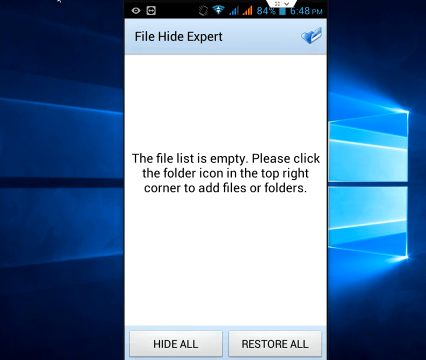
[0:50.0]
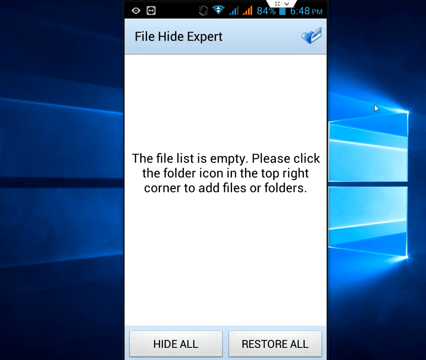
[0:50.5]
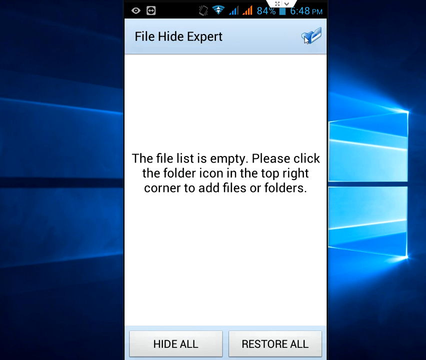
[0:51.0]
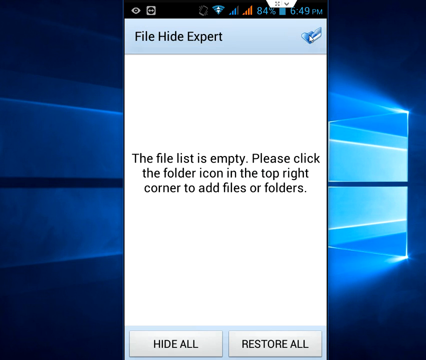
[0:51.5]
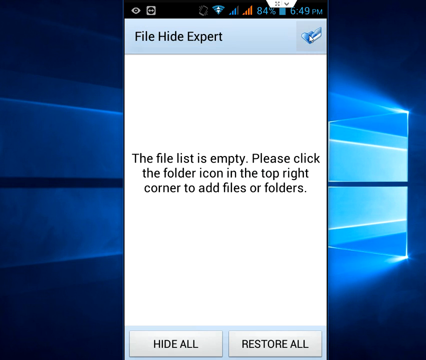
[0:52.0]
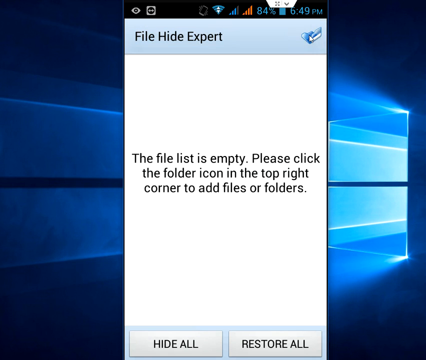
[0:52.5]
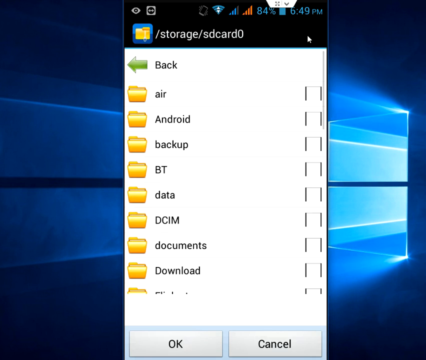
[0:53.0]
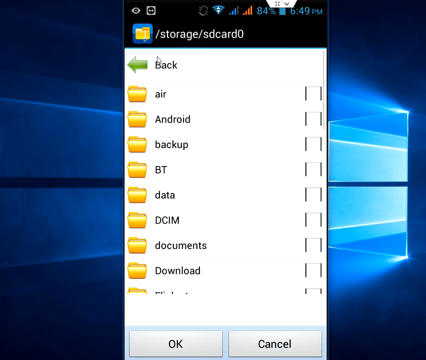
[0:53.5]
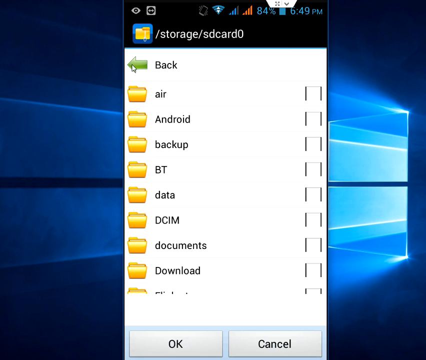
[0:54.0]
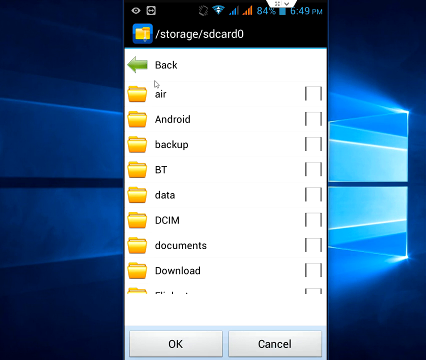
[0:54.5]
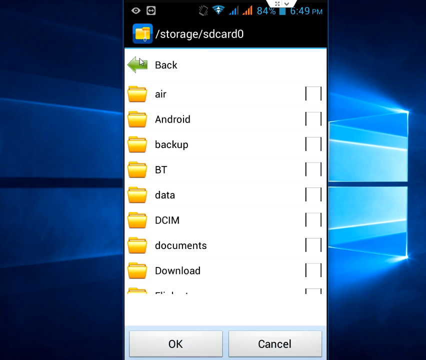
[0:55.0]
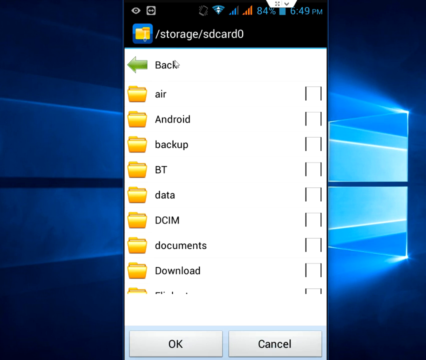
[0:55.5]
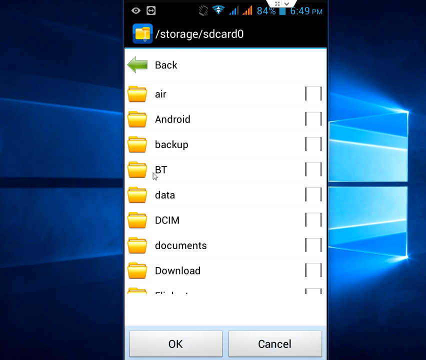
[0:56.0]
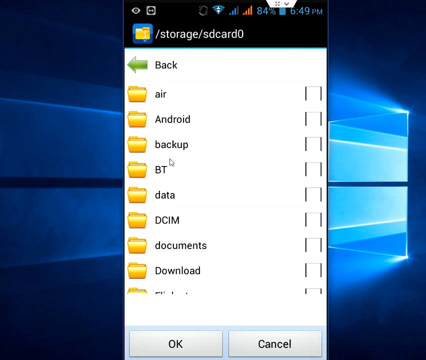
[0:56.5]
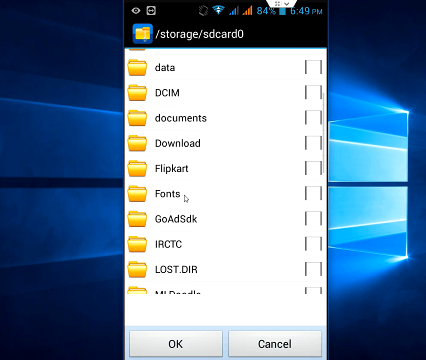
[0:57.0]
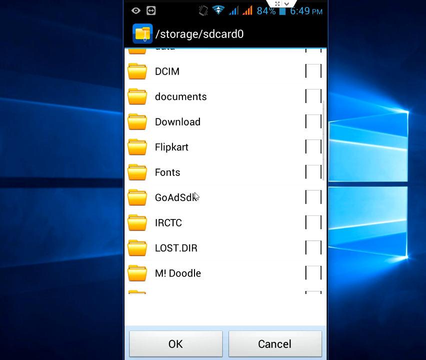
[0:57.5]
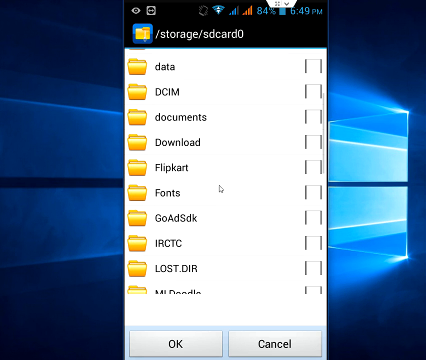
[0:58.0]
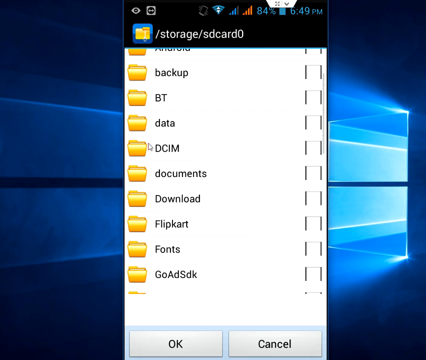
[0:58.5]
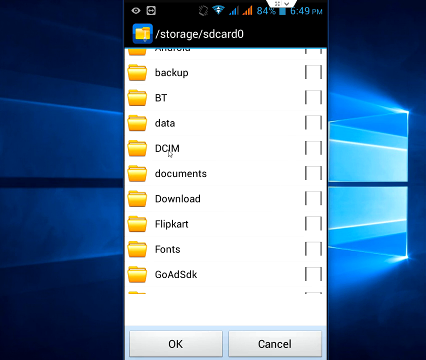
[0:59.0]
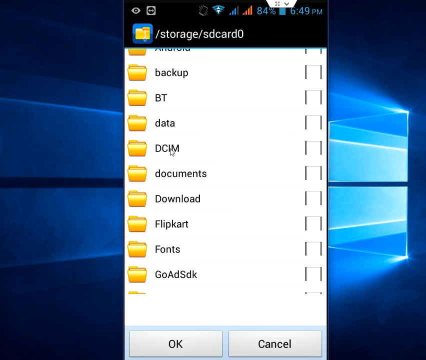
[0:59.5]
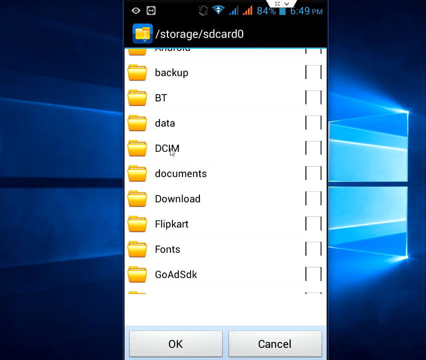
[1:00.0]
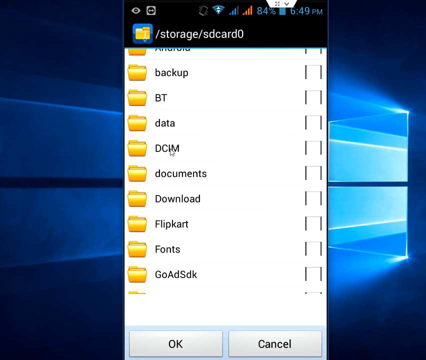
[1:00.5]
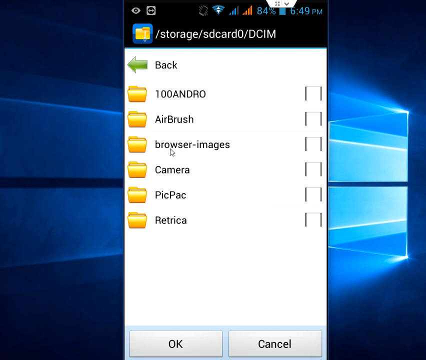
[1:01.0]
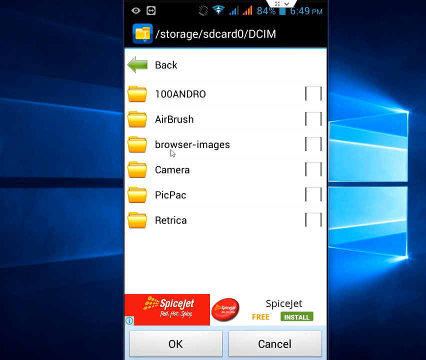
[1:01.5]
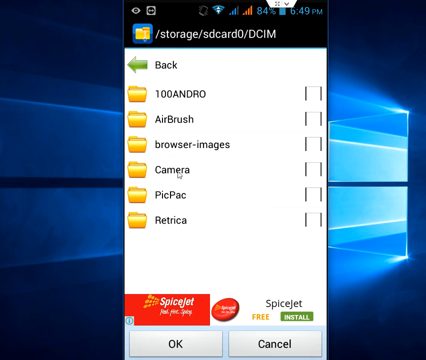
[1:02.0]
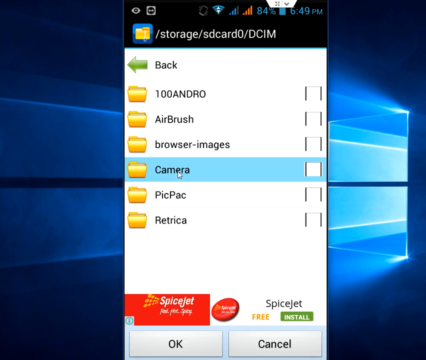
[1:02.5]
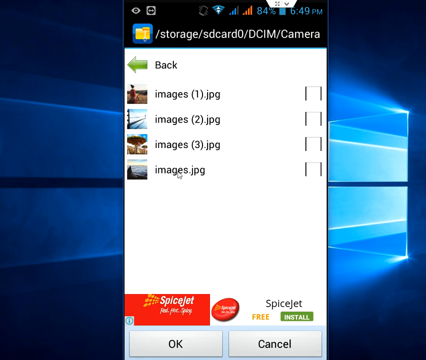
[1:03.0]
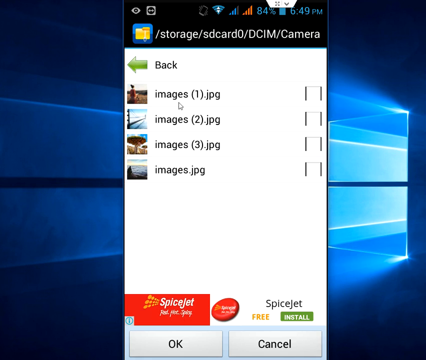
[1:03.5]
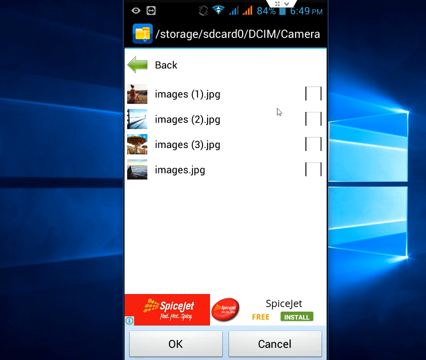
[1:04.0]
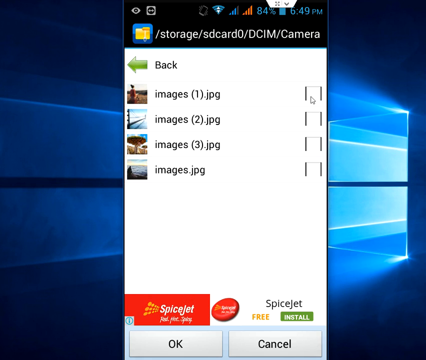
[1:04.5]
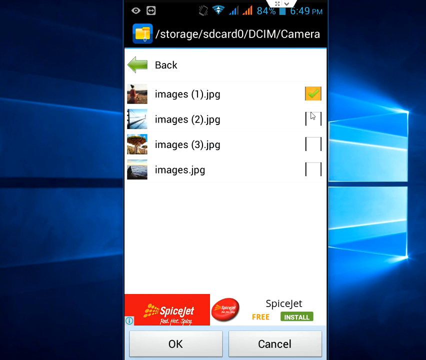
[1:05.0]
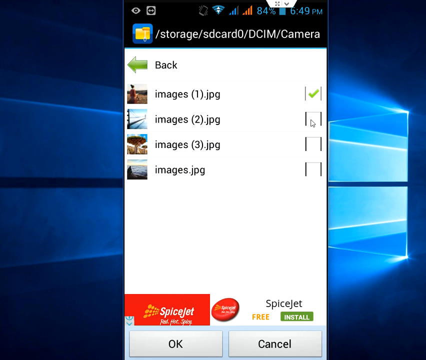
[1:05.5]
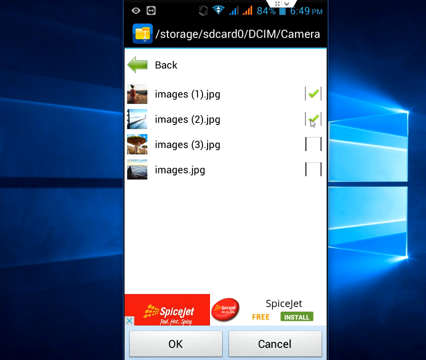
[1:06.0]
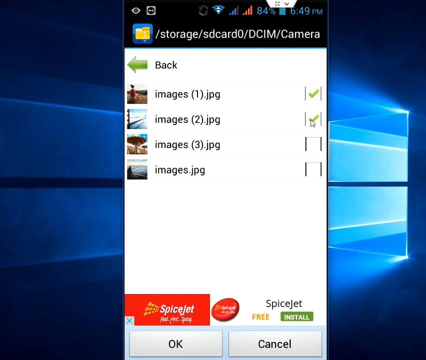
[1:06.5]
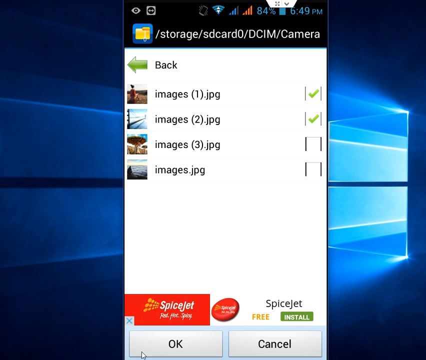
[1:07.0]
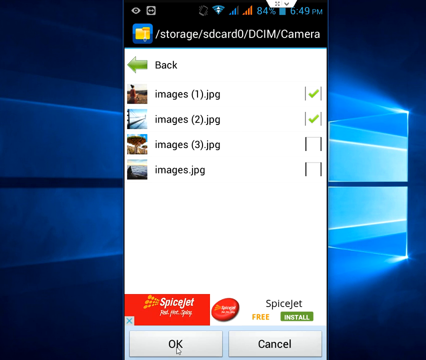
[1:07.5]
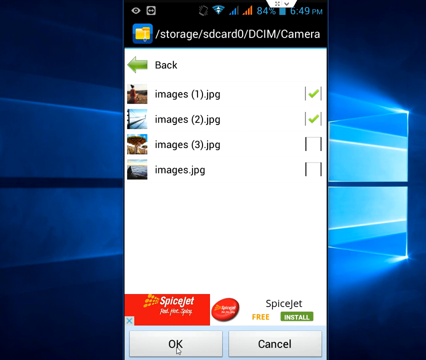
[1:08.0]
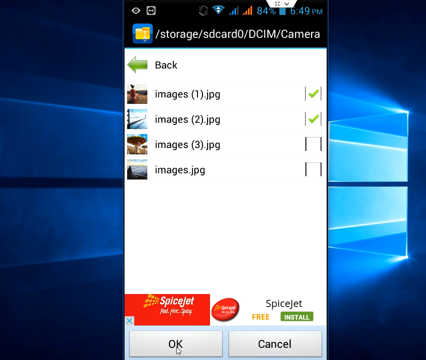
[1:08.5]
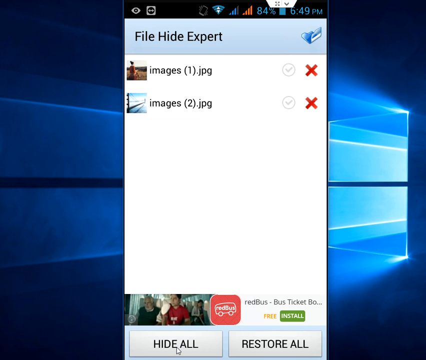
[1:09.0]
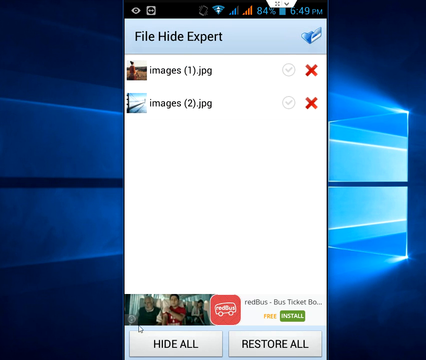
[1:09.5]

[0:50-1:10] The phone screen on the Windows desktop shows the white screen with the File Hide Expert header. The user clicks the file icon in the upper right corner, which opens a file directory screen. The mouse hovers over the selection reading "Back" with a green arrow and moves quickly back and forth over it, as if to indicate that selection. The cursor scrolls down through the various files in the directory, hovers over the DCIM folder, and clicks it. Another file directory appears, where the user selects the camera folder, which contains four images. The mouse moves somewhat around the image names, and then the boxes on the right next to the top two images are checked. The two selected images are then moved to File Hide Expert.